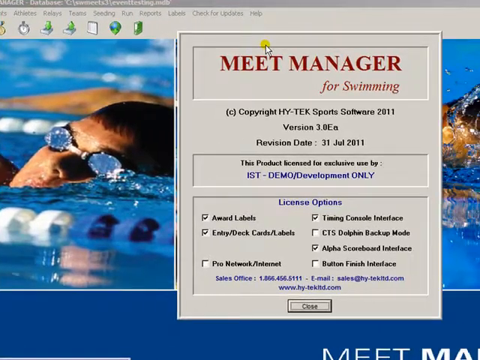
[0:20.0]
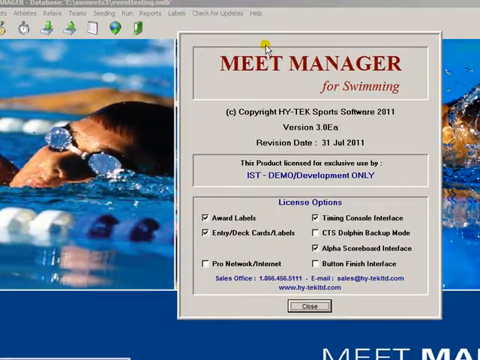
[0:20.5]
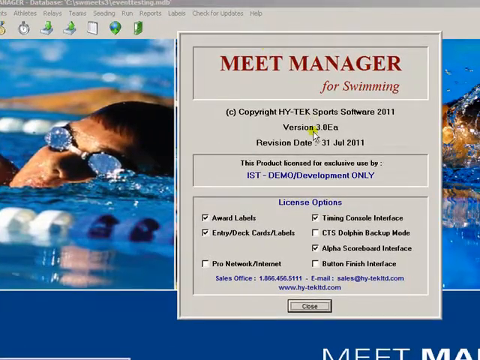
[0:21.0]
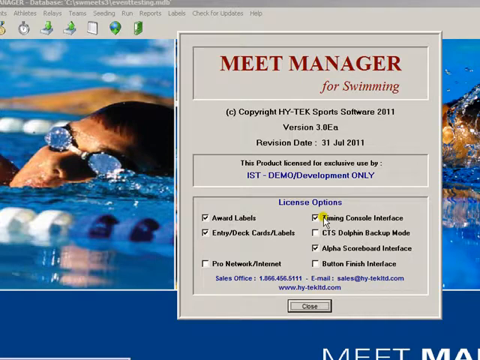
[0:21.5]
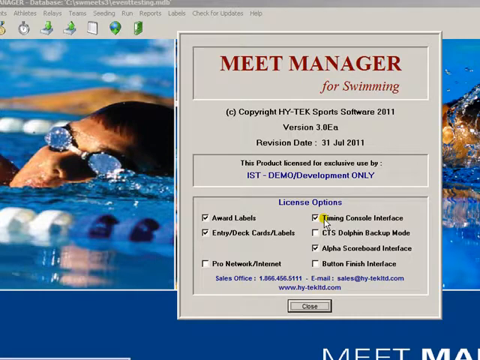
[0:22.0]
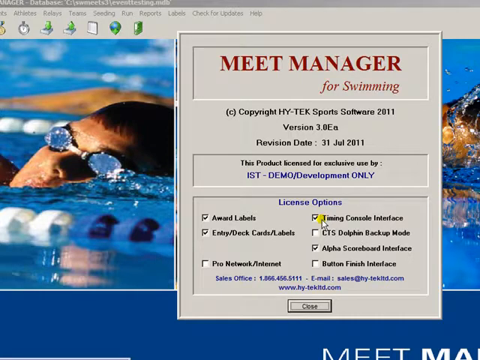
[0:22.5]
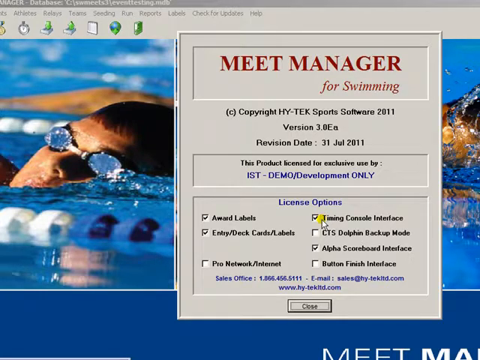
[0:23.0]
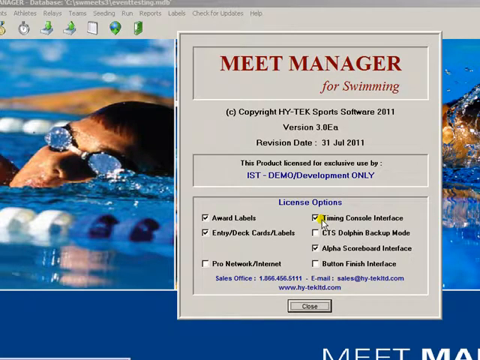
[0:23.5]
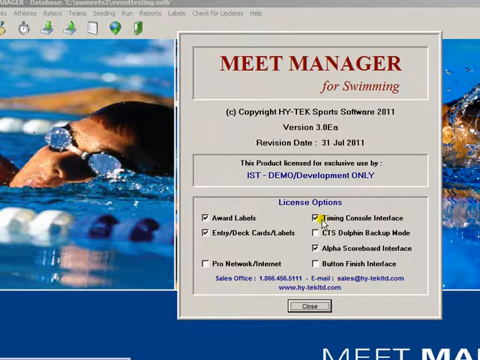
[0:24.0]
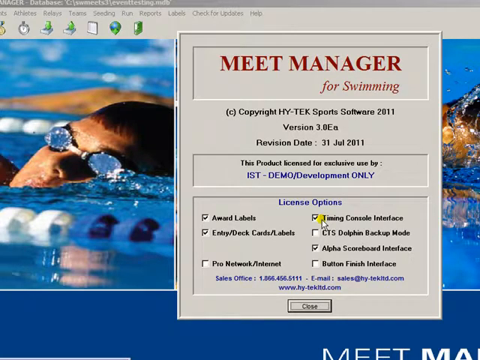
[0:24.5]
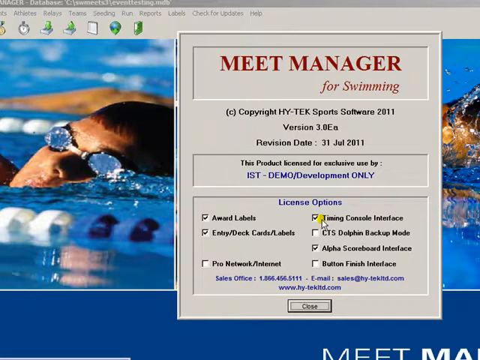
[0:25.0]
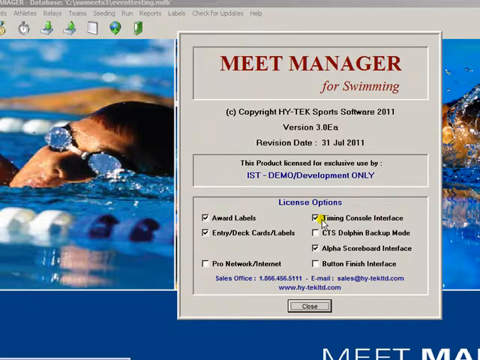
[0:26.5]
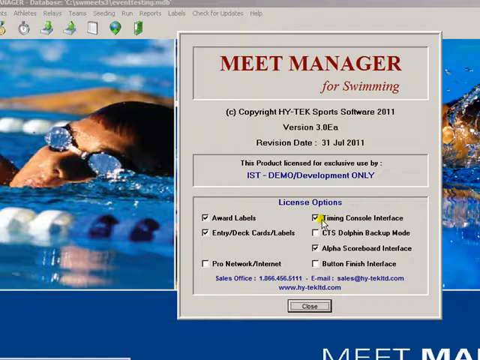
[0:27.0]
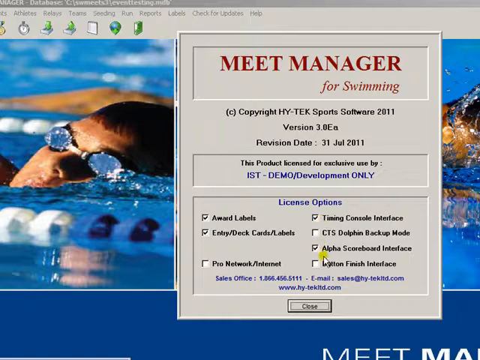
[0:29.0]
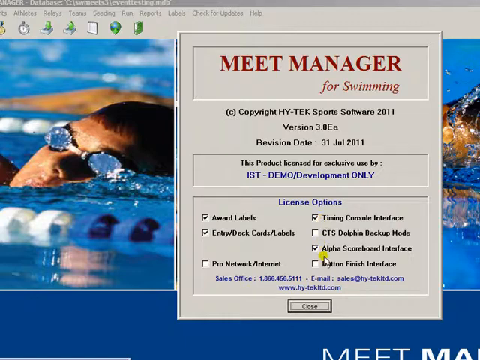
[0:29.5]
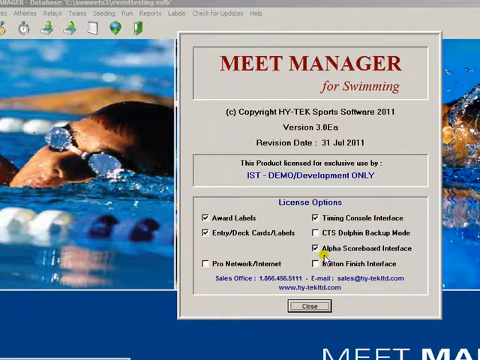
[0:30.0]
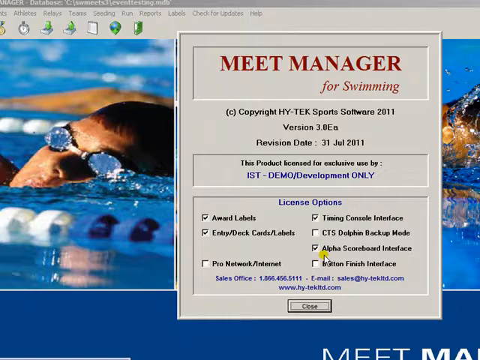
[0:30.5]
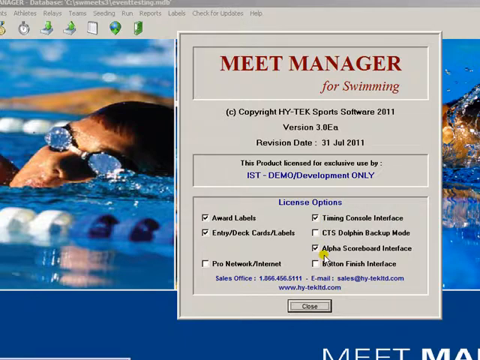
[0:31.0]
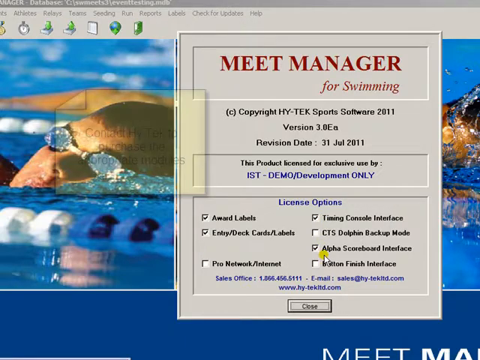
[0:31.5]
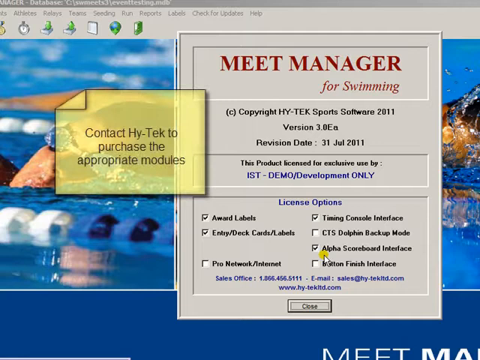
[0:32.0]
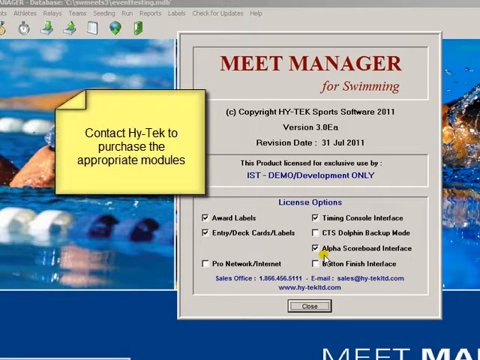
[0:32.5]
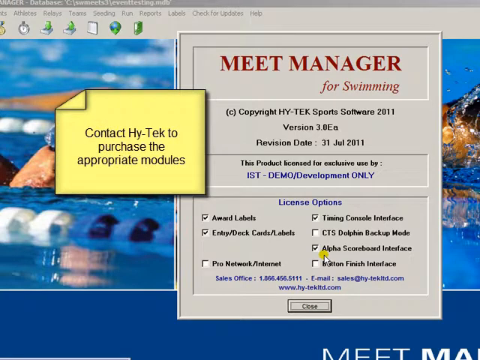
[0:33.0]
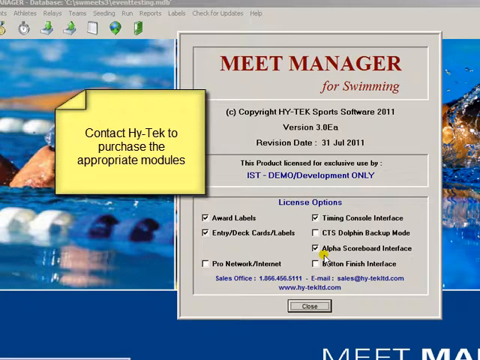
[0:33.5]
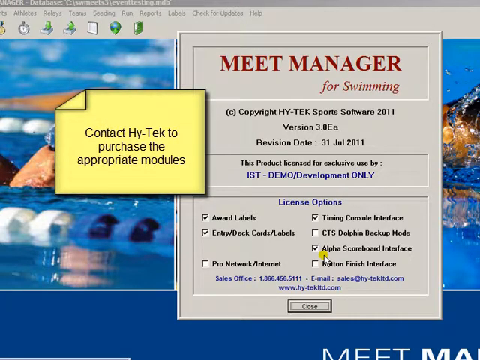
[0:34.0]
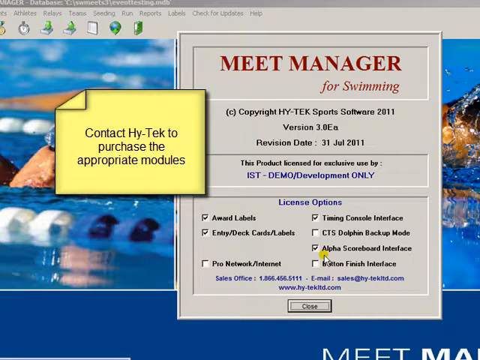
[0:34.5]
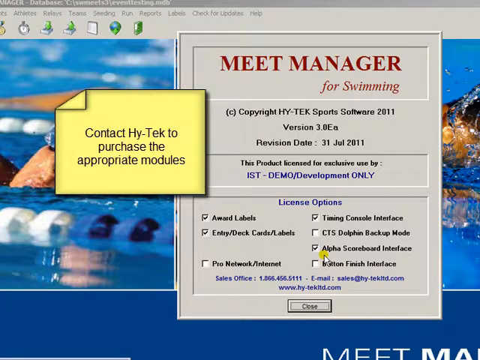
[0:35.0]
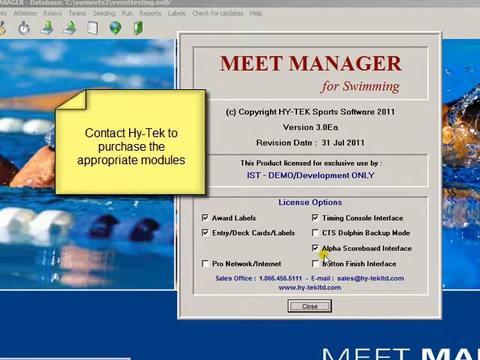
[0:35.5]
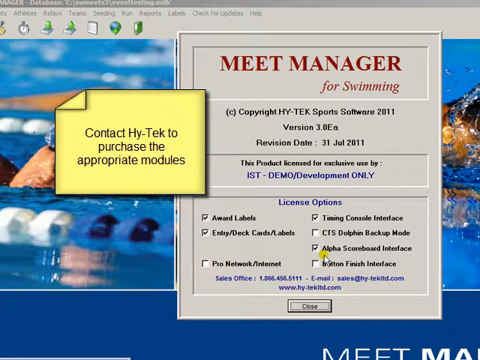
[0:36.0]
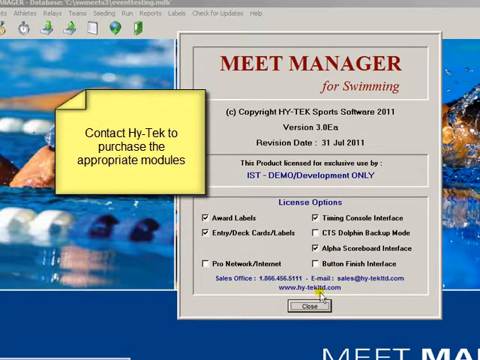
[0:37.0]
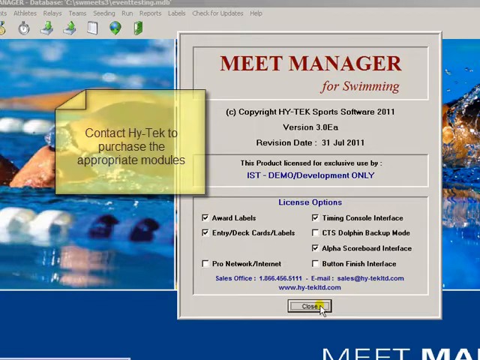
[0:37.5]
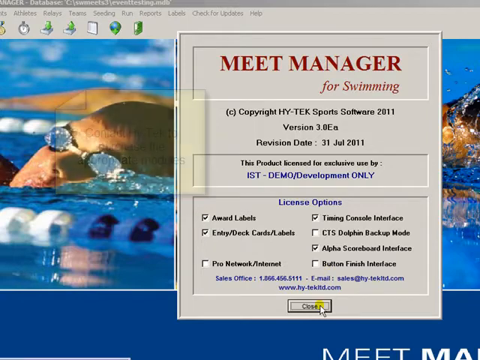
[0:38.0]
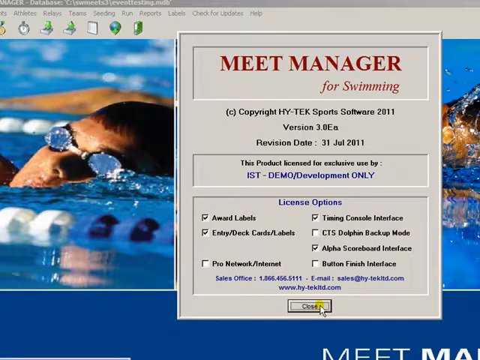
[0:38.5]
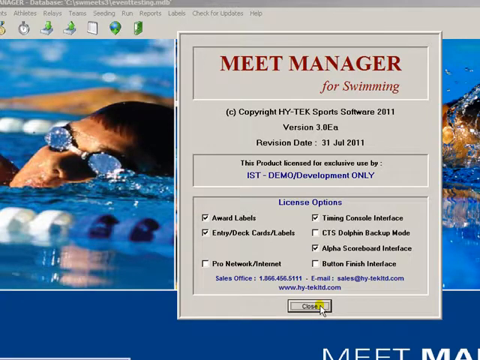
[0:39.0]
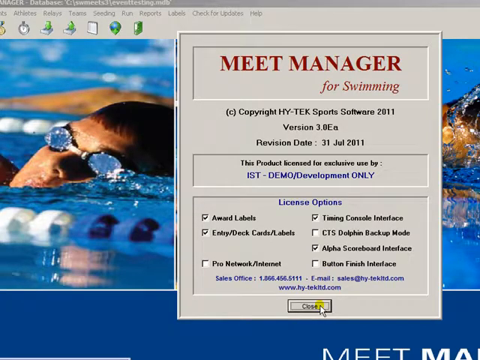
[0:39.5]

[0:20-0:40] The software's About page is shown as different options are selected. A pop-up appears: a yellow sticky note that says "Contact Hi-Tech to purchase the appropriate modules." The options visible on the About menu are "Award Labels", "Entry/Debt Card/Labels", "Pro Network", "Timing Console Interfaces", "Alpha Scoreboard Interface" and "Button Finish Interface". The About page also has contact information for the software developer, including a telephone number, "1-866-456-5111", and an email address, "sales@hy-tekltd.com". It shows the software's version number as "3.0Ea", with a revision date of "31 July 2011".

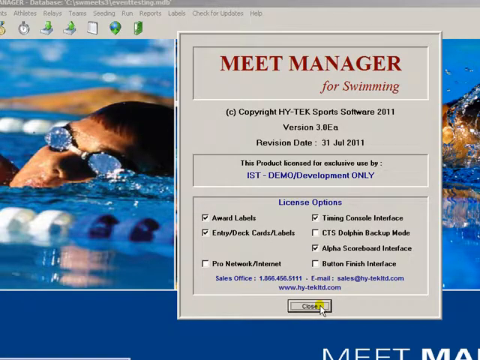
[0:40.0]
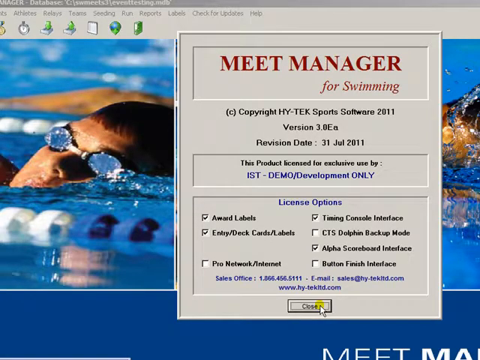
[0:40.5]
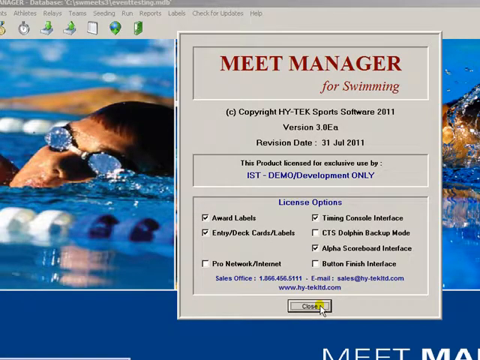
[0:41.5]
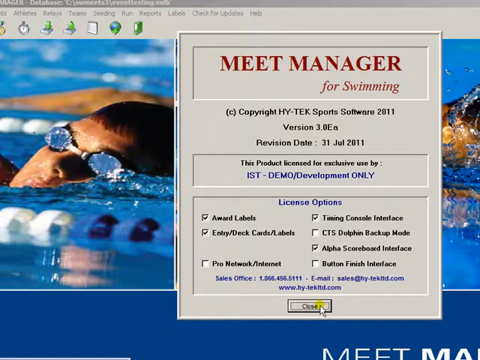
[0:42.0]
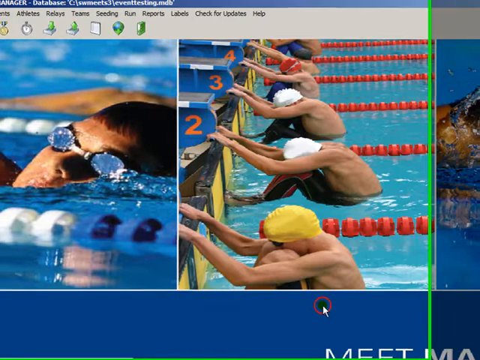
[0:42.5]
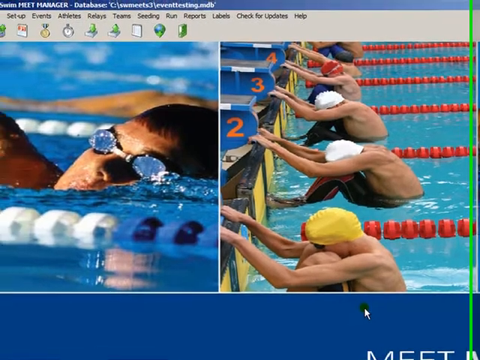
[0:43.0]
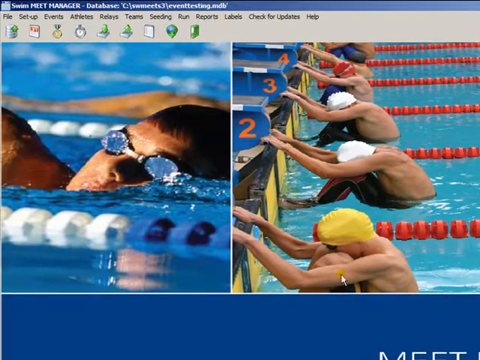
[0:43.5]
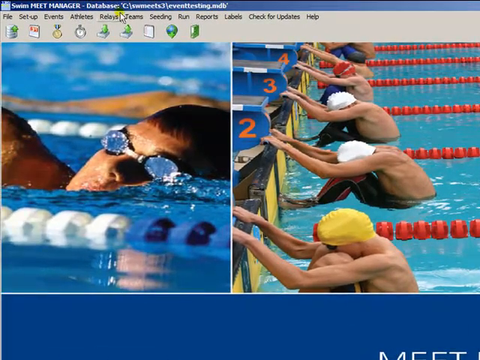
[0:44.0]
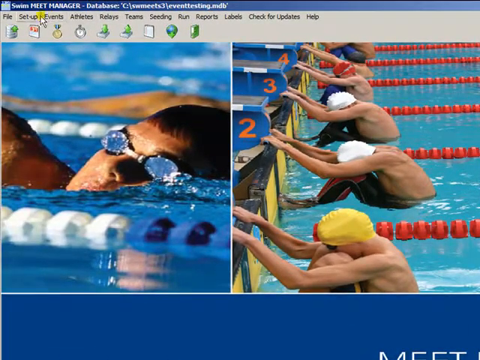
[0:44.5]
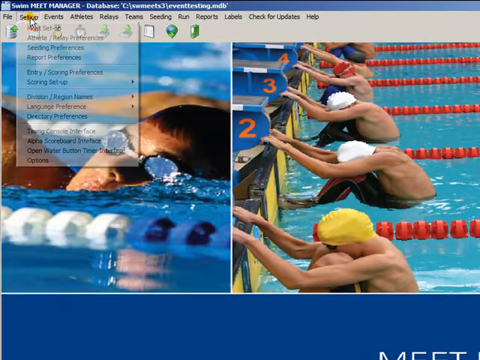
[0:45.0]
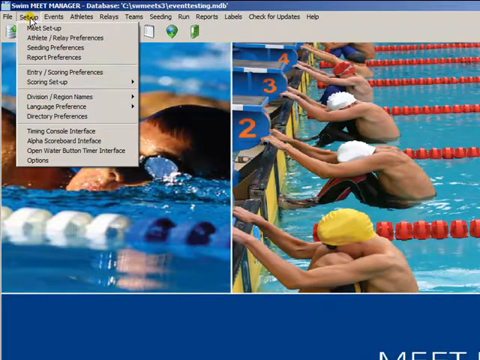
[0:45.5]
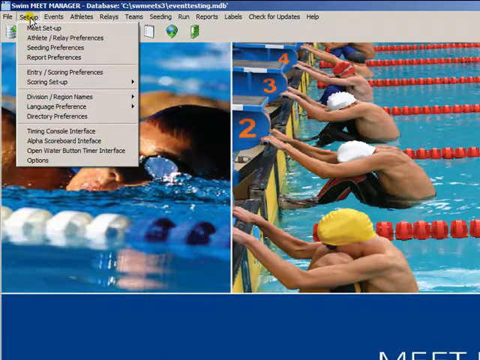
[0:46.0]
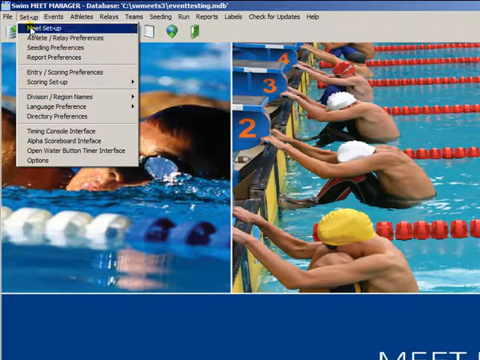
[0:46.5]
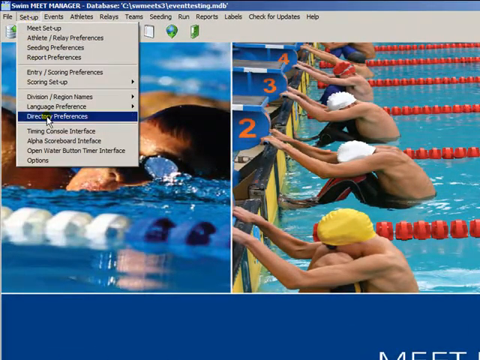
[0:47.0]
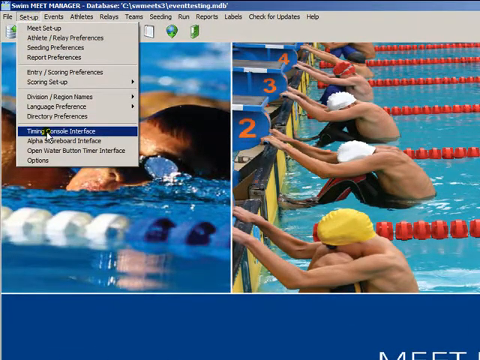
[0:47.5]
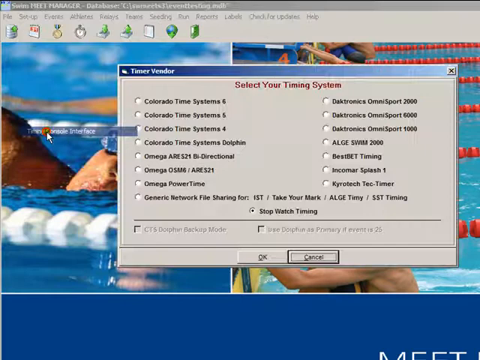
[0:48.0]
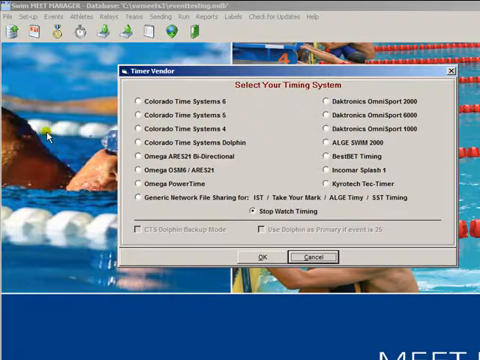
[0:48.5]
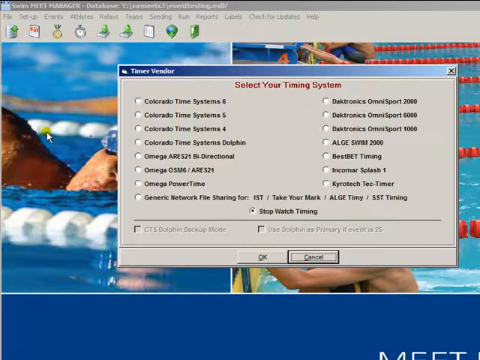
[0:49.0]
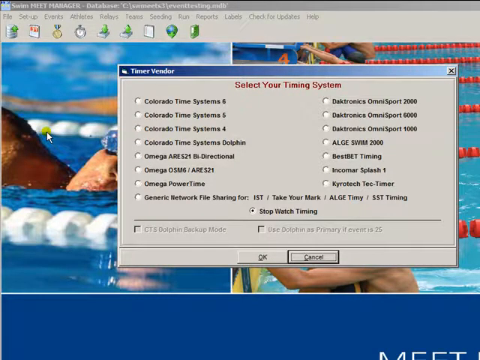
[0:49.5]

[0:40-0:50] In the swim meet management software, the cursor selects the Setup menu and then Timing Console Interface. A menu appears with several different timer vendor selections, asking the user to select the appropriate timing system, with OK and Cancel options. Over 15 timing systems are listed, including "Colorado Time Systems 6", "Colorado Time Systems 5", "Colorado Time Systems 4", "Colorado Time Systems Dolphin", "Omega ARE-S21 Bi-Directional", "Omega OSM6/ARES21", "Daktronics Omnisport 2000", "Daktronics Omnisport 6000", "Daktronics Omnisport 1000", "ALGE SWIM 2000", "BestBet Timing", "Incomar Splash 1" and "KryoTech Tec-Timer".